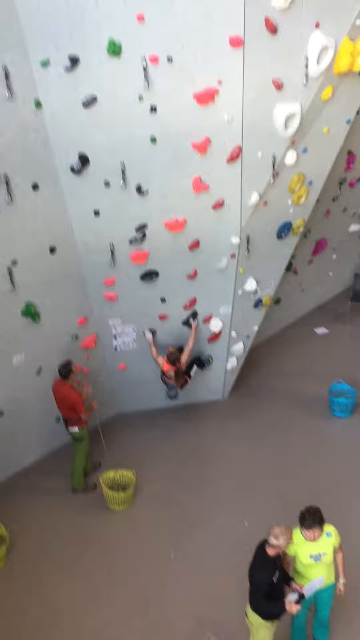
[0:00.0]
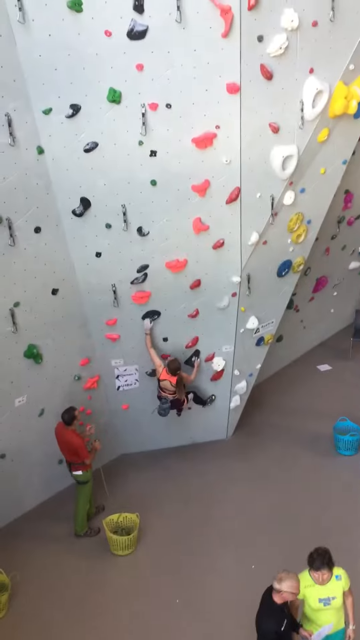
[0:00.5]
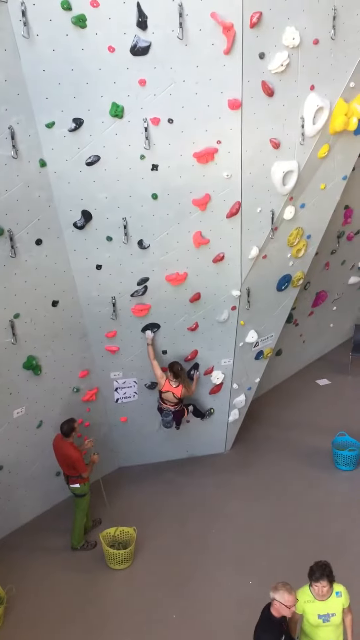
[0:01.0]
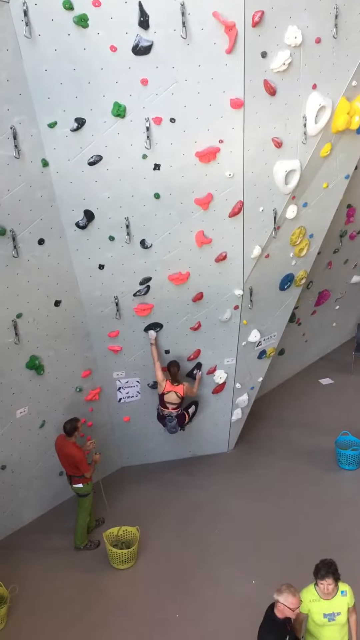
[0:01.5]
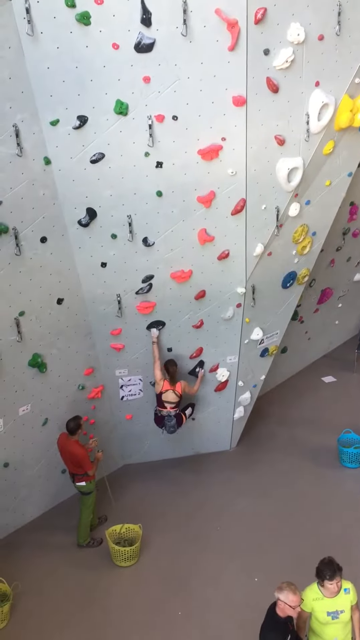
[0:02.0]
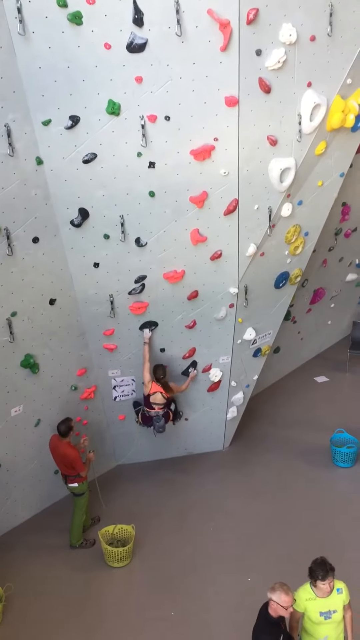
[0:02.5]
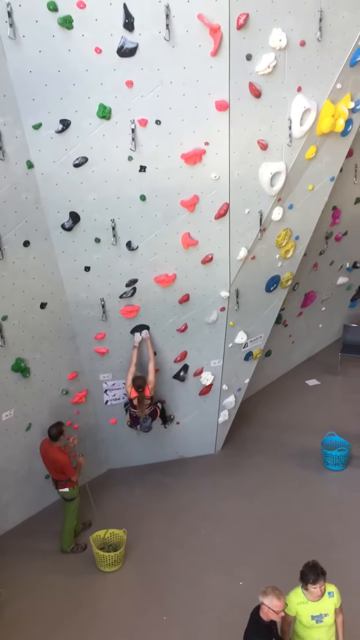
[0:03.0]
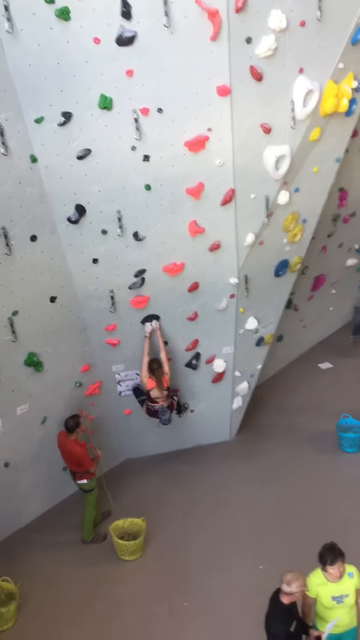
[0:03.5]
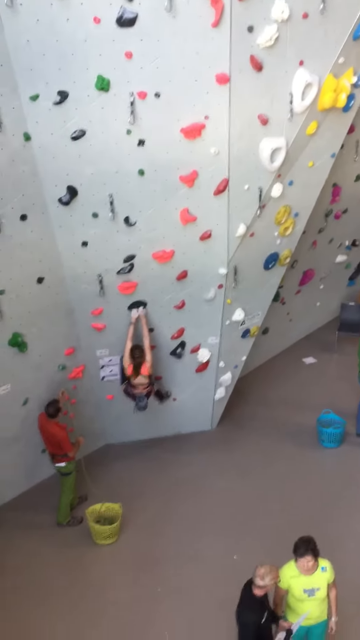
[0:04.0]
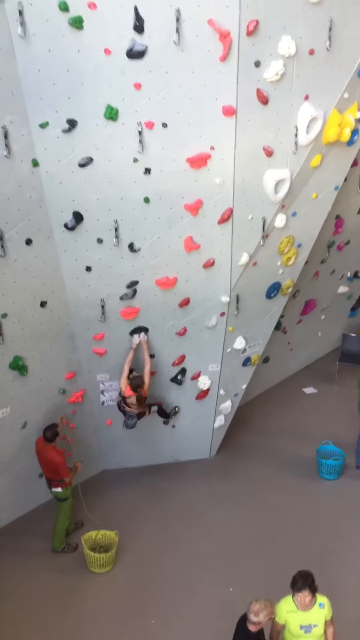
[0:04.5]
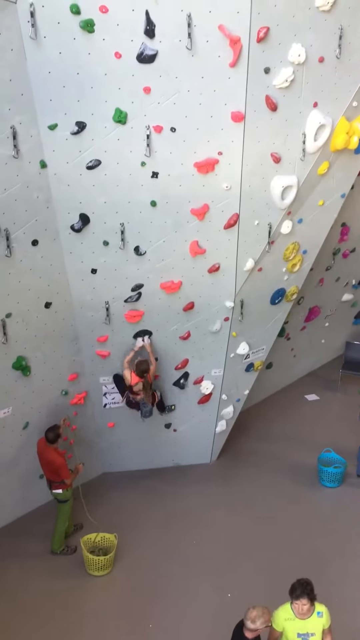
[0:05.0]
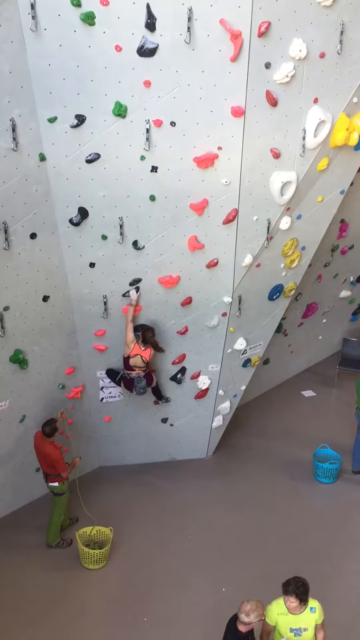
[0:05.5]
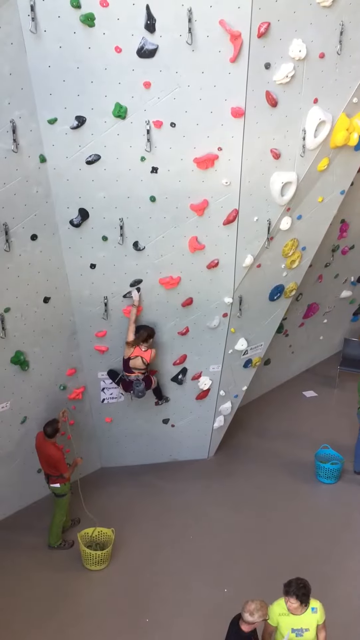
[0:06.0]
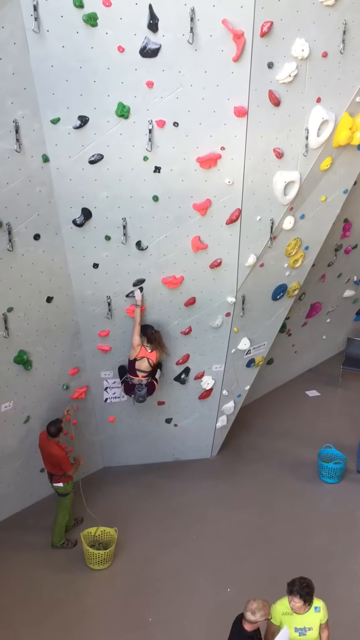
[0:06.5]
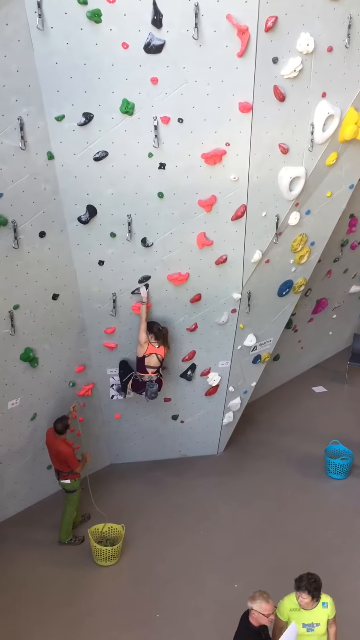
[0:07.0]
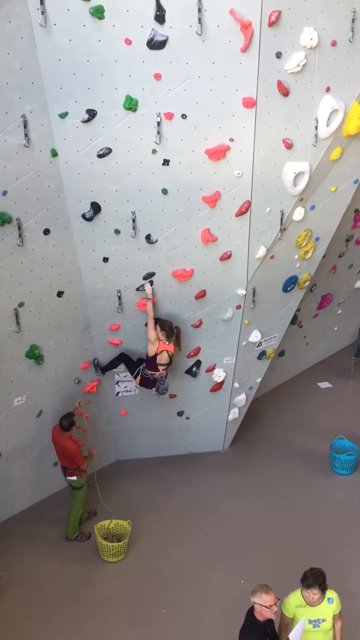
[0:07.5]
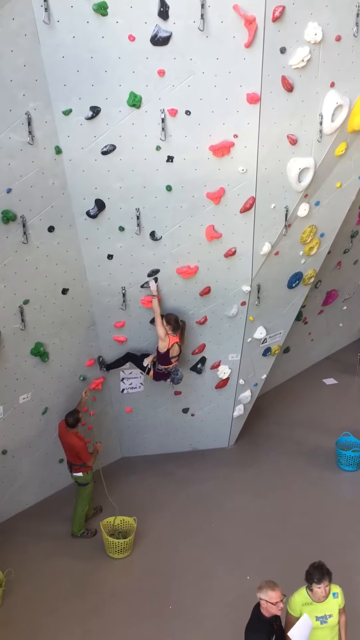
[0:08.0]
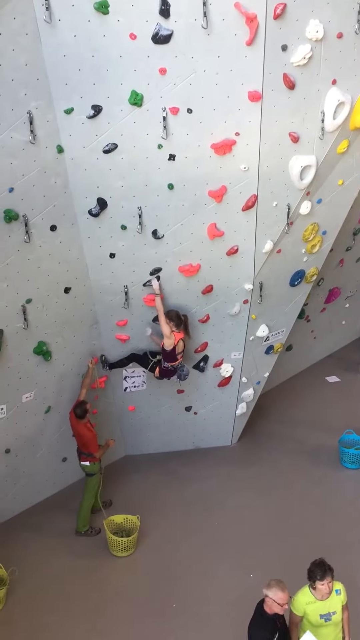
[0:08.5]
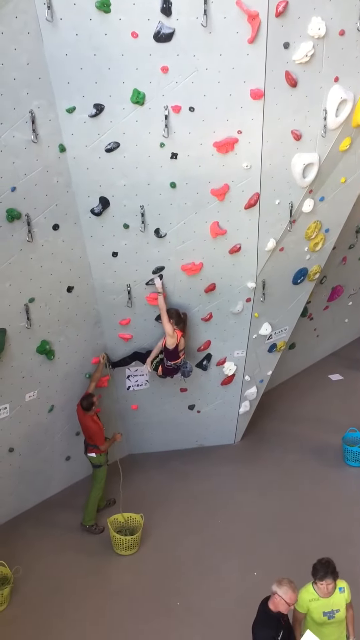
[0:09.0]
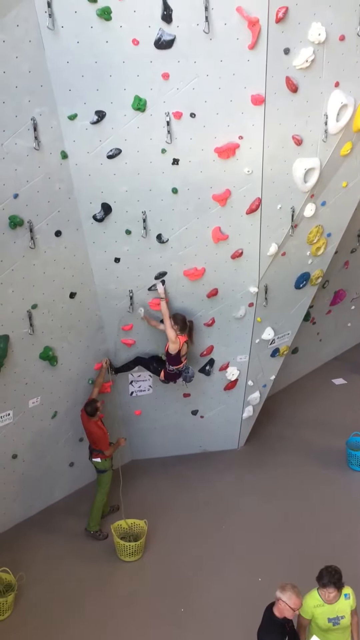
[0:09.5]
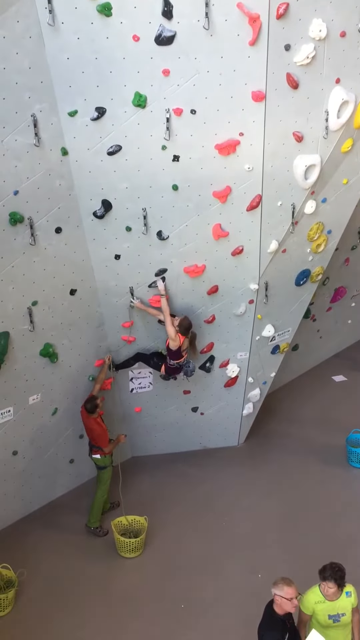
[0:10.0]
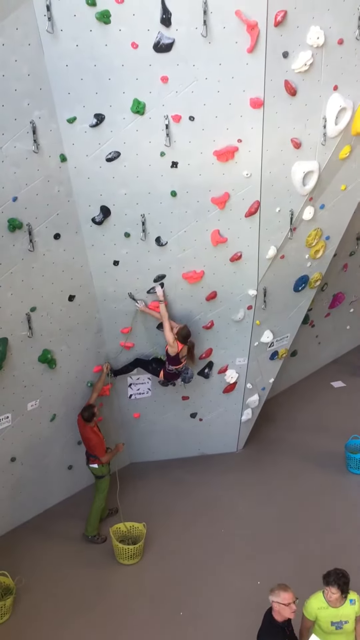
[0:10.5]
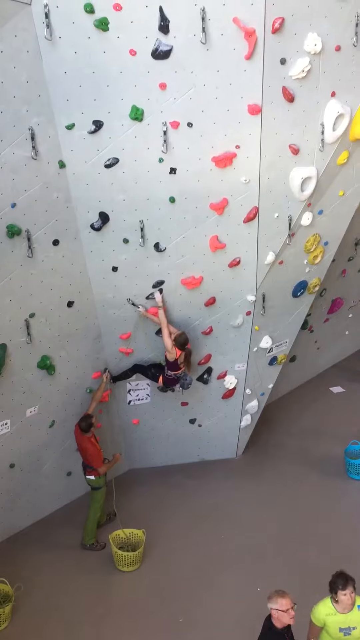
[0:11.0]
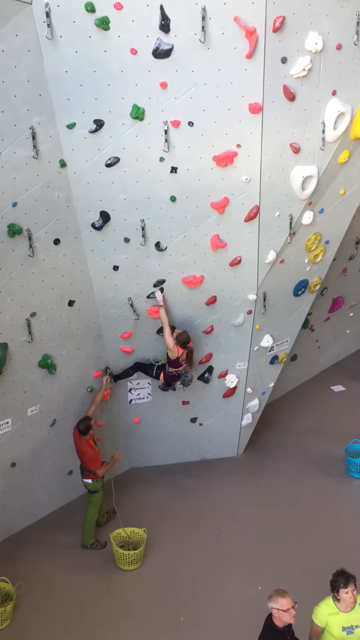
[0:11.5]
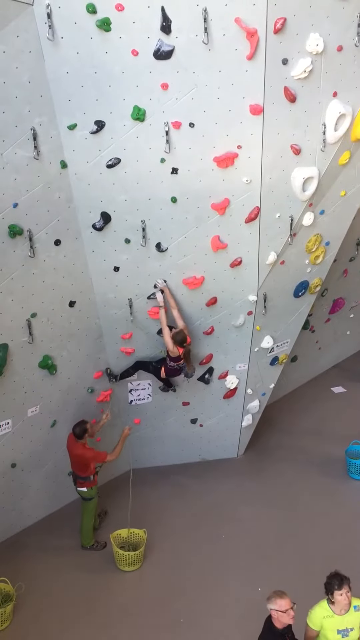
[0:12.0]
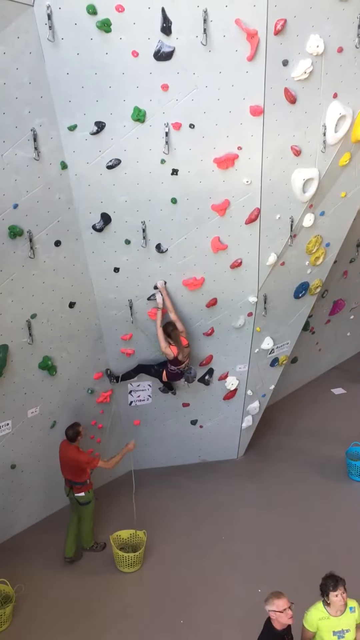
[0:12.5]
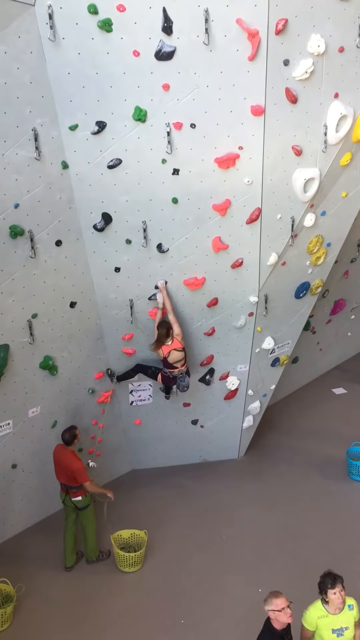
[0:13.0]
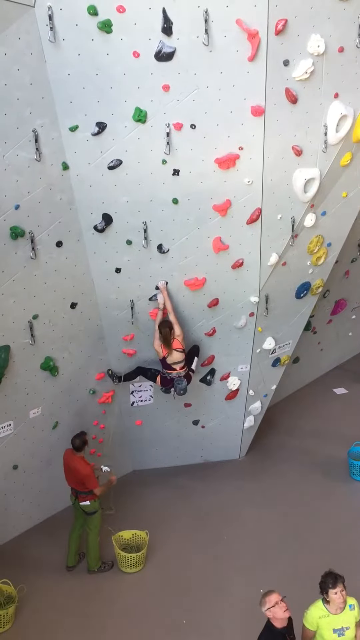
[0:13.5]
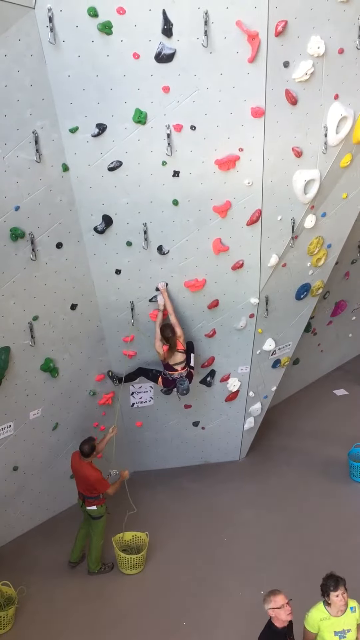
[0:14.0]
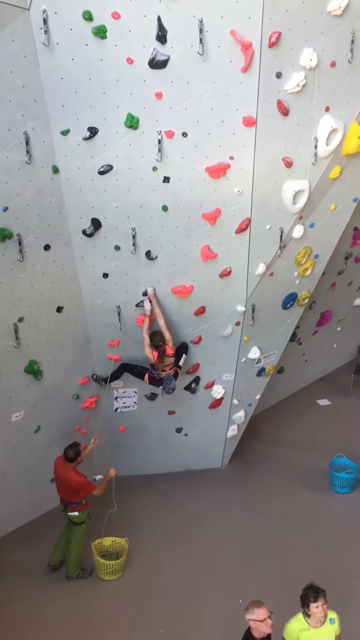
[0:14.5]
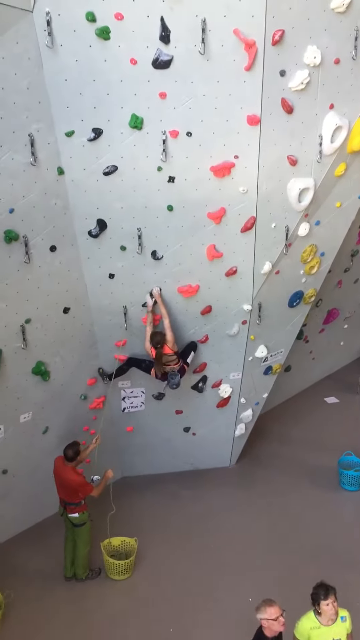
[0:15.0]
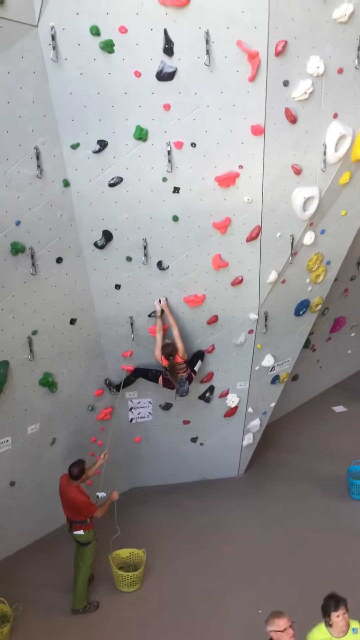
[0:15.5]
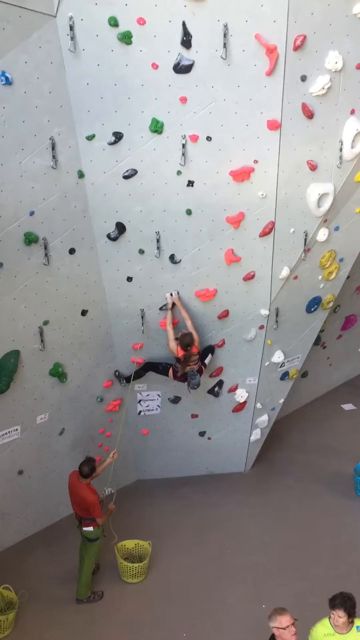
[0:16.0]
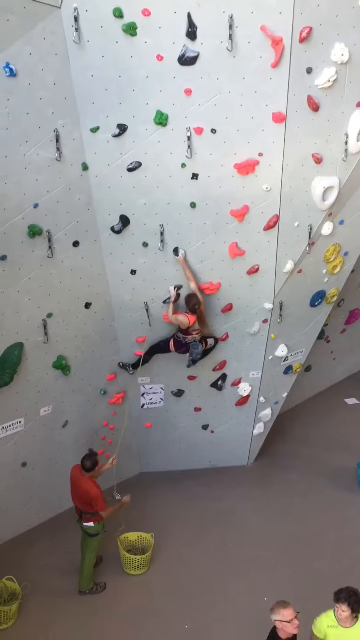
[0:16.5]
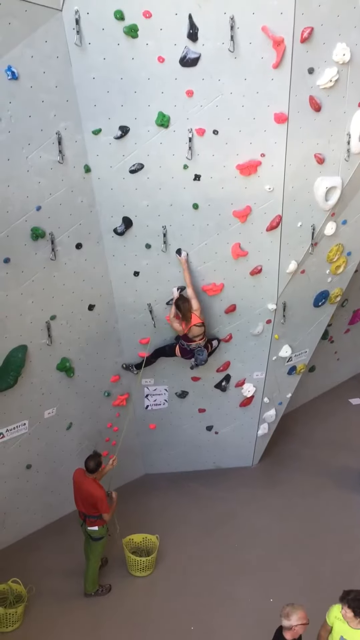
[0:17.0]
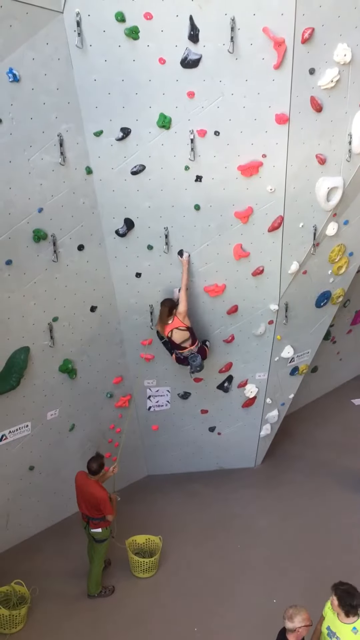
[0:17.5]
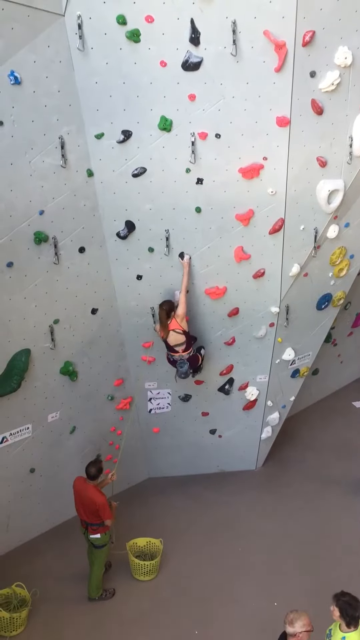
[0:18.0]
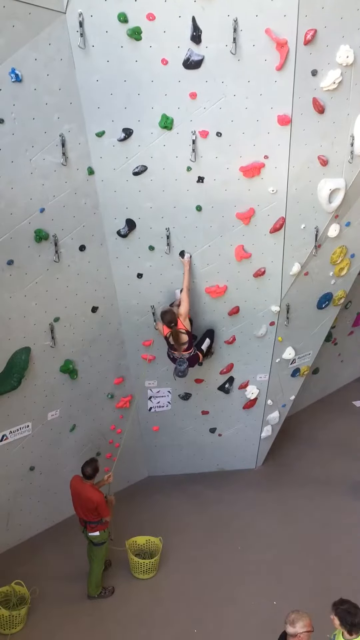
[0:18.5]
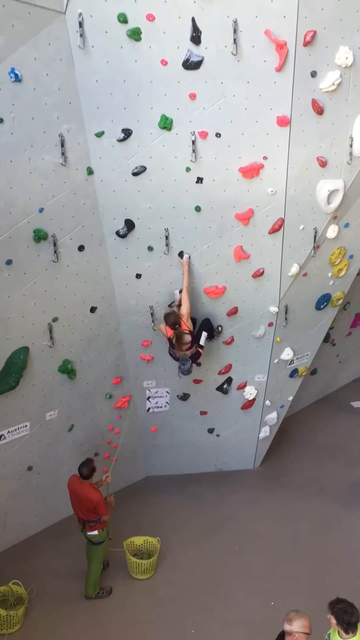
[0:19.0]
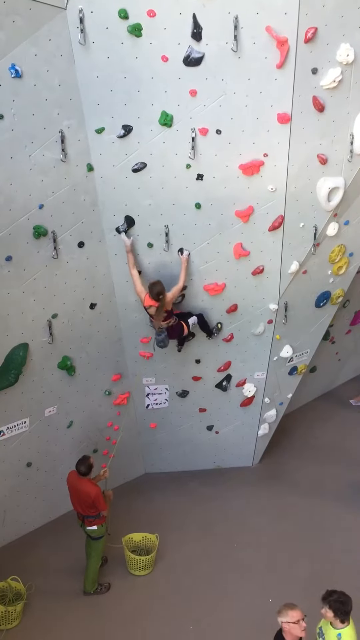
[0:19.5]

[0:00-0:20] The video takes place in a gym or building with a gray floor and a climbing wall in the upper left of the frame. The wall is gray with green, pink, white, yellow, and blue climbing parts on it. A man in a red shirt and green pants stands facing right, watching a young woman on the wall, with a yellow bucket to his right. Another partially visible yellow bucket is in the lower left, and a blue bucket is on the right side. In the lower right corner, two men stand right next to each other, facing away from the wall: the man on the left wears a black shirt and green pants, and the man on the right wears a yellow shirt and green pants. The woman on the wall wears black pants, gray shoes, and a pink shirt; her hands have white tape or chalk on them, her hair is in a ponytail, and she is hanging on to the wall. She begins to climb as the men in the lower right talk and the man on the left watches her. She moves left, grabs a black piece, and pulls herself up to grab a pink piece. As she moves her leg, the man in red reaches out to grab her foot and help her. She grabs a chain and lets it go, spreads her legs and pulls herself up on a black piece, grabs another black piece, gathers herself, and reaches up to the left to grab another black piece.